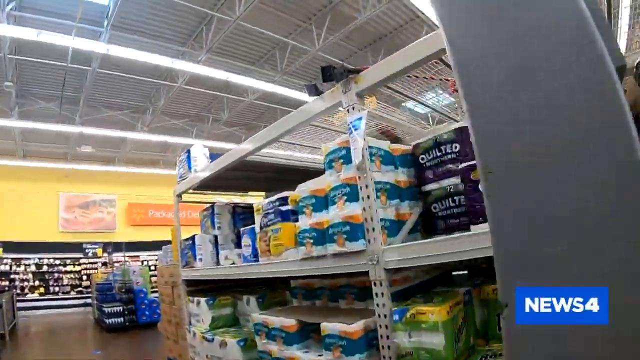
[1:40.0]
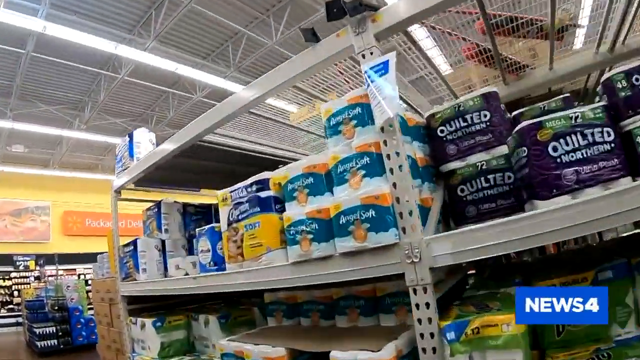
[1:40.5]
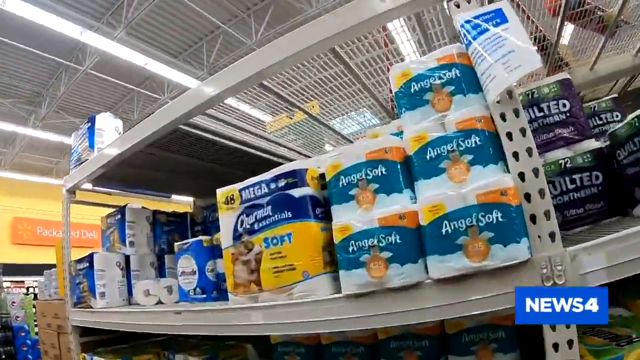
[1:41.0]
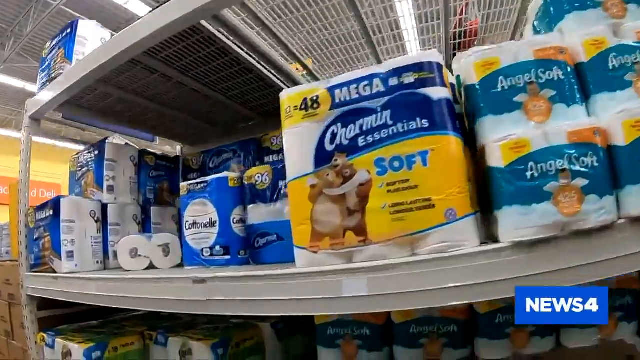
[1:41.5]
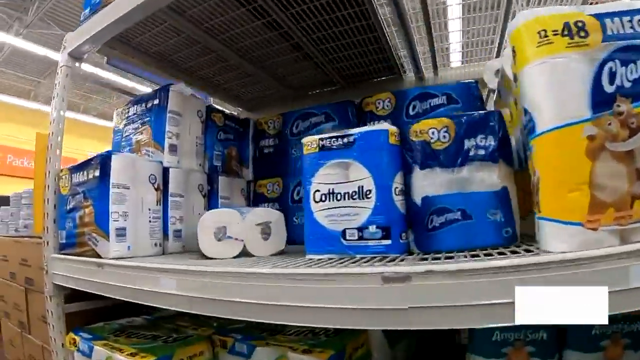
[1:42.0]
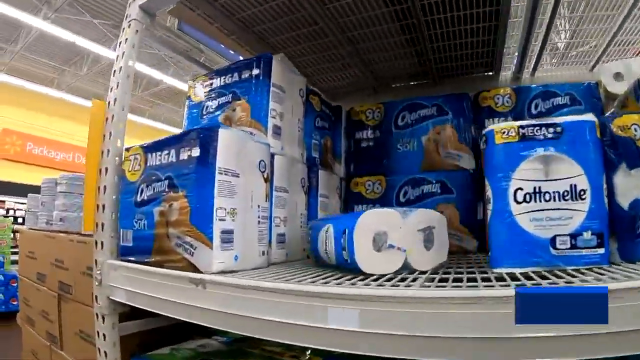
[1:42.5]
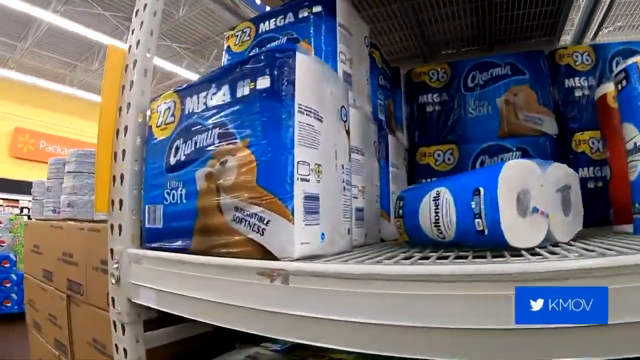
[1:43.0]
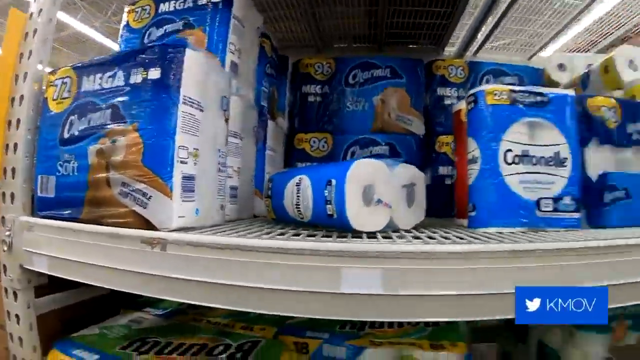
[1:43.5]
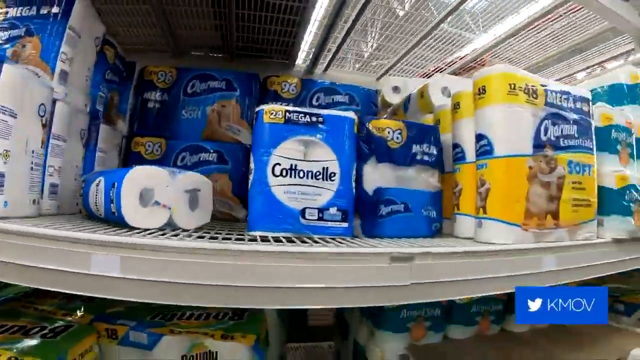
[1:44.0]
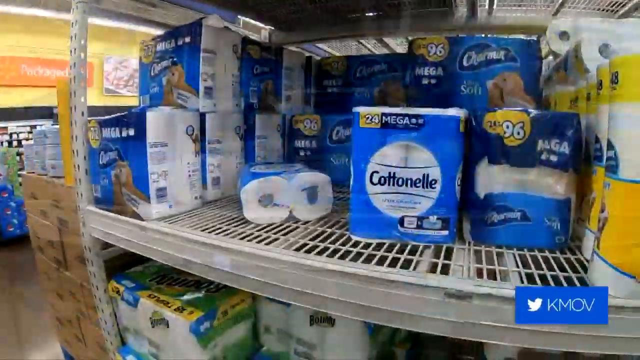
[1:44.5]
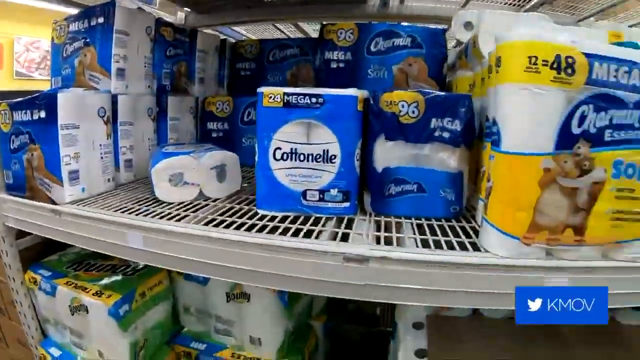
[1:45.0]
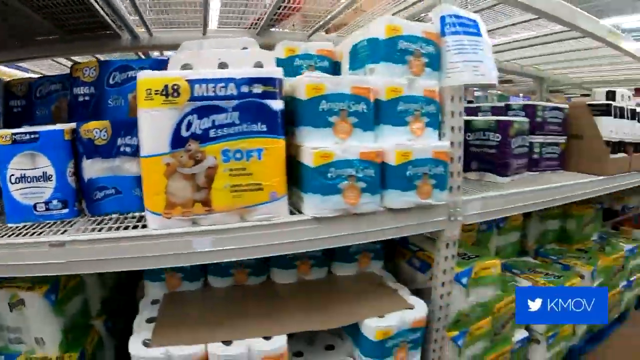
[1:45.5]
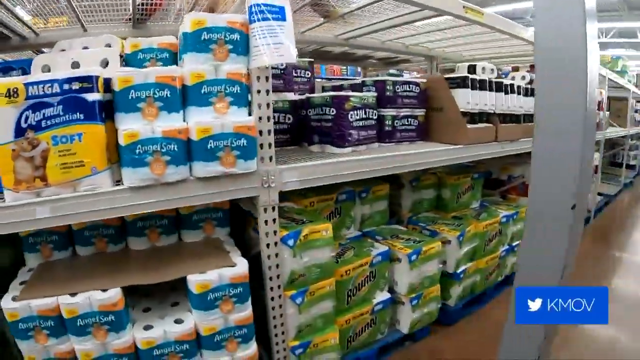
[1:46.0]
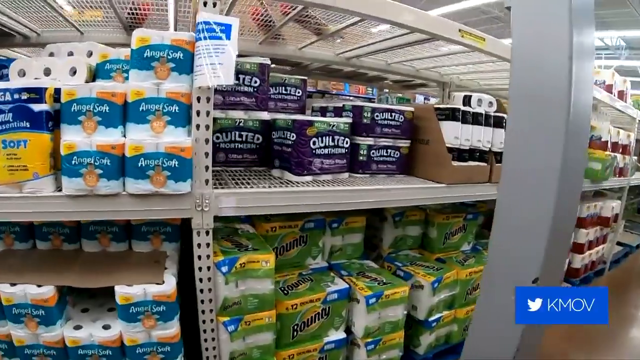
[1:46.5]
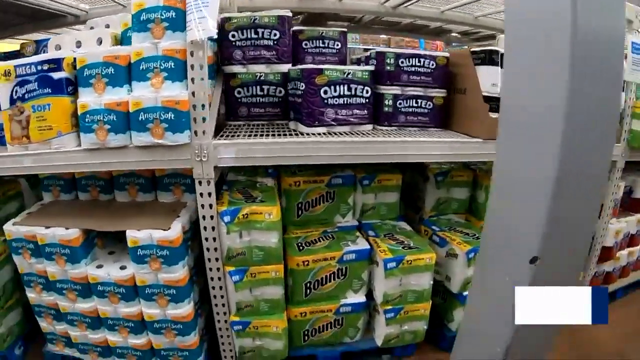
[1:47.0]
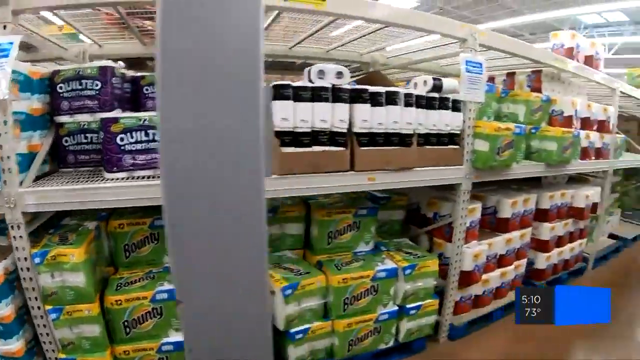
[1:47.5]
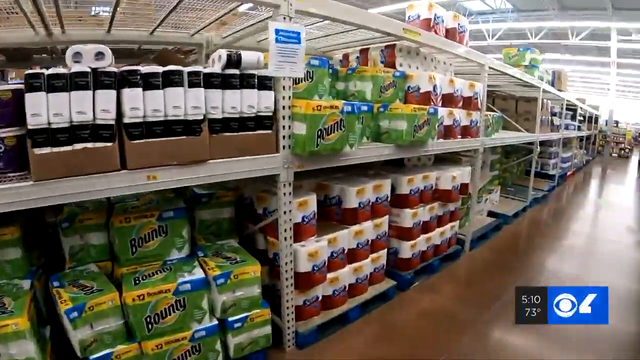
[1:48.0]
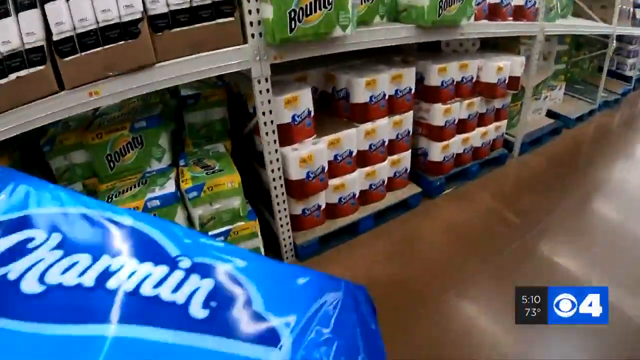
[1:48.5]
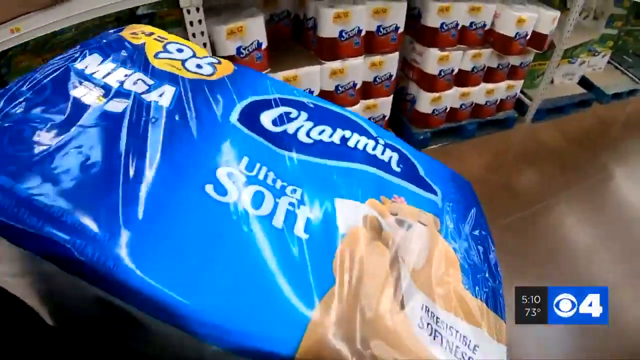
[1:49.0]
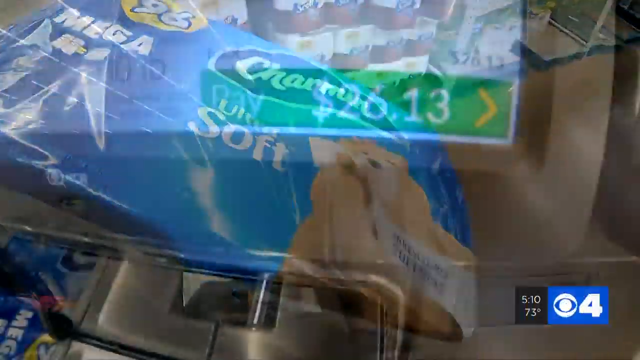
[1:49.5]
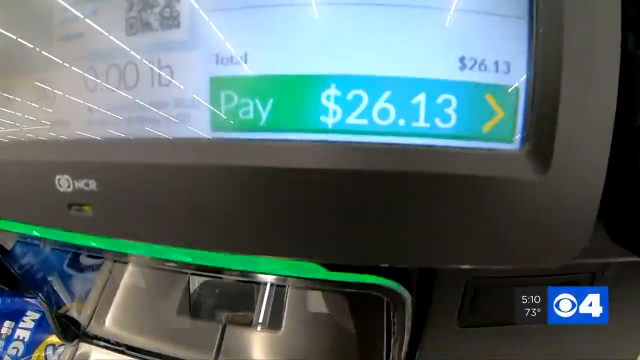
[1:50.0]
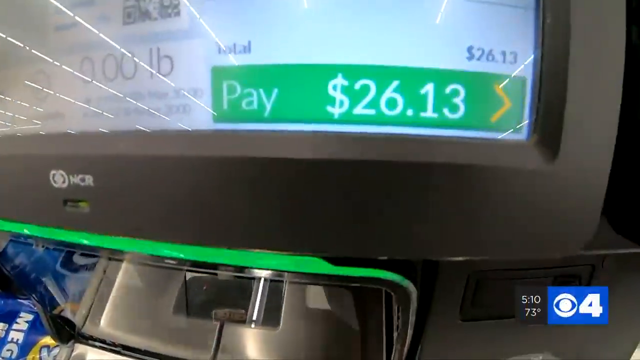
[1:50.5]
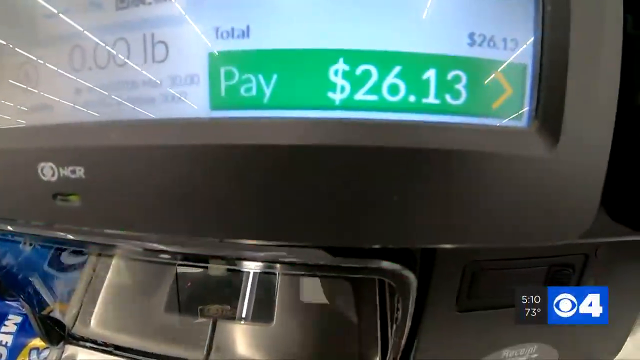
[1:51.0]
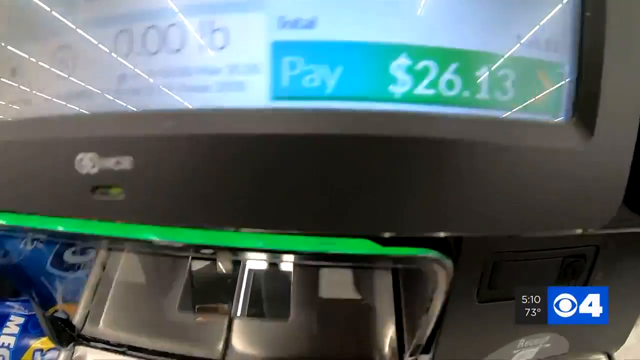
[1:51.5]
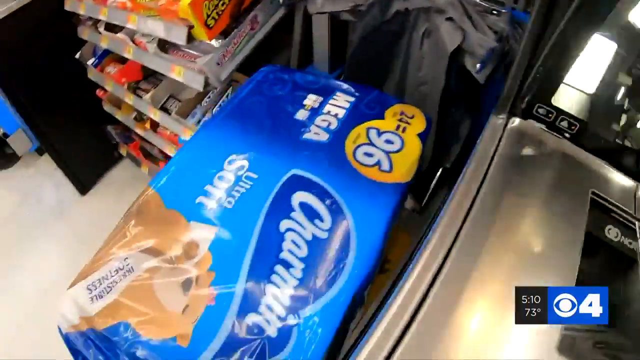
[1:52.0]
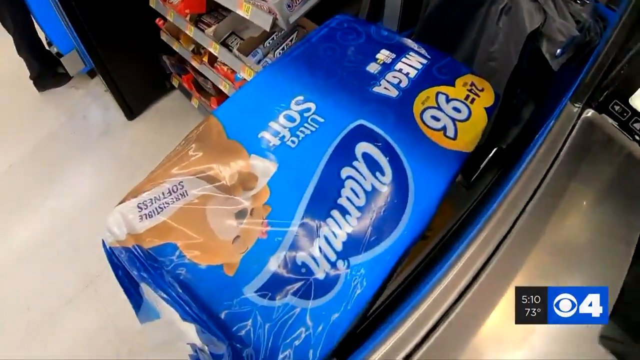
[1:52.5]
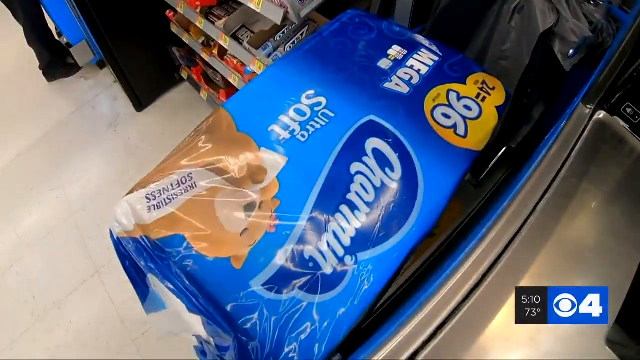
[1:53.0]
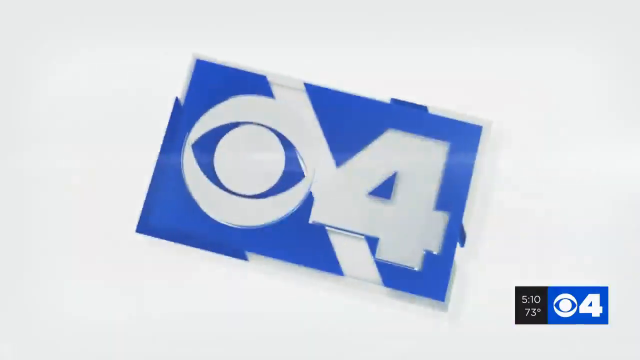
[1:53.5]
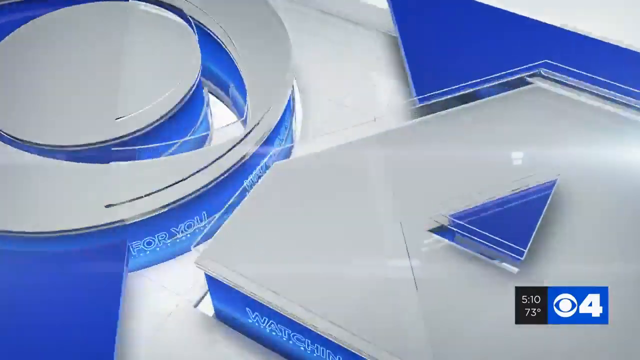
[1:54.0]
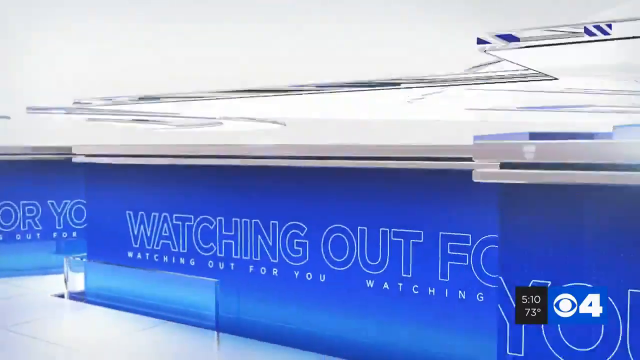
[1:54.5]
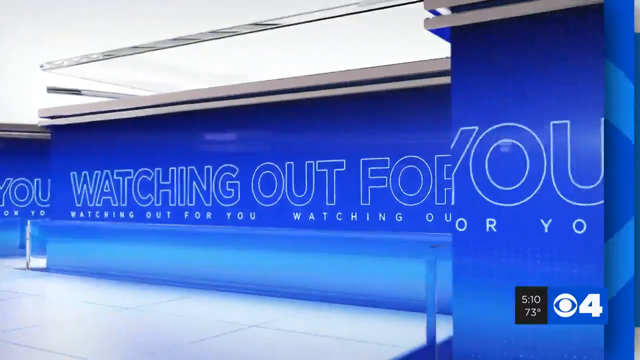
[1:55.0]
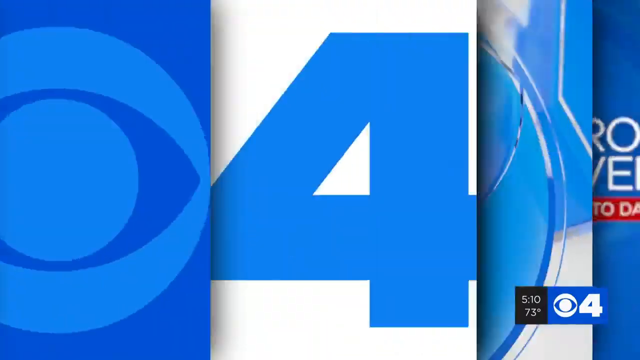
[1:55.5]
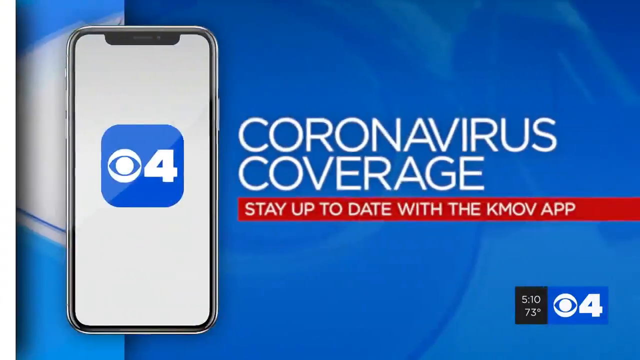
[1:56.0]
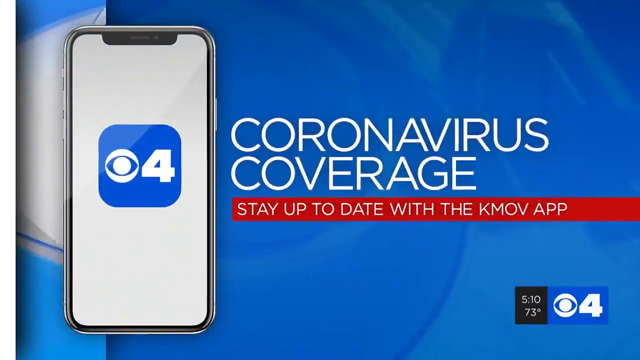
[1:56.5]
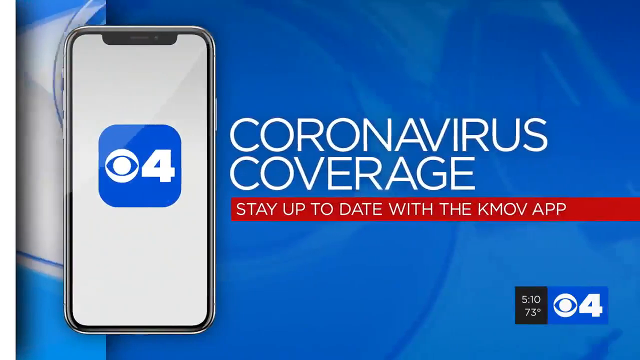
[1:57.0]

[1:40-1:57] The camera moves down an aisle of toilet paper with Quilted Northern, Angel Soft, a Mega Pack of Charmin Soft, Cottonelle, and another Mega Pack of Charmin Soft at $72. Other brands such as Quilted Northern and Bounty are looked at. At a register, a price of $26.13 is shown; what was scanned looks like the Mega Pack of 96 rolls, bought through self-checkout. The video then goes back to the Channel 4 news station with coronavirus coverage, and the screen says "stay up to date with the KMOV app".